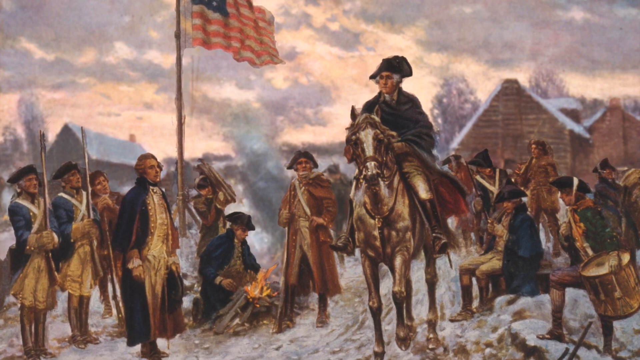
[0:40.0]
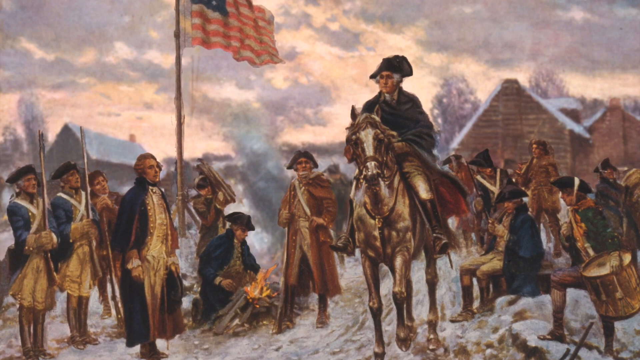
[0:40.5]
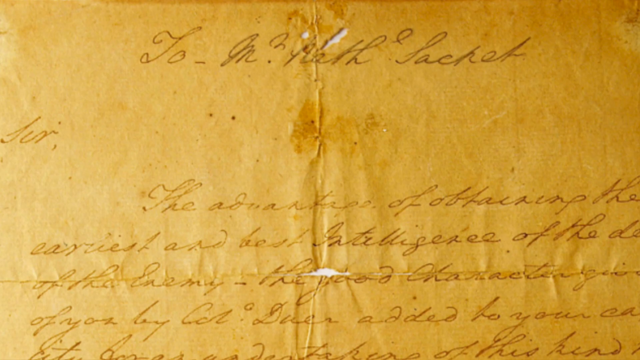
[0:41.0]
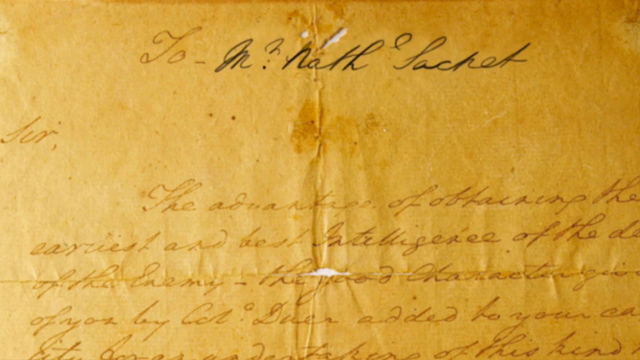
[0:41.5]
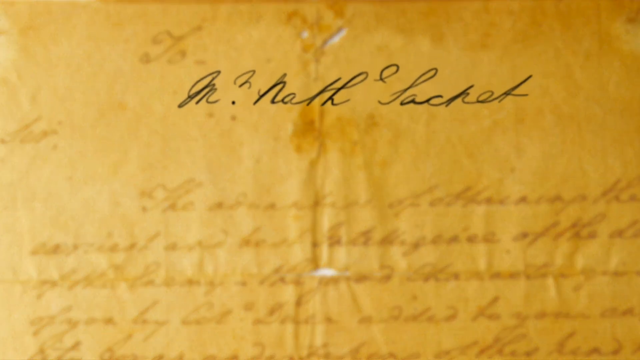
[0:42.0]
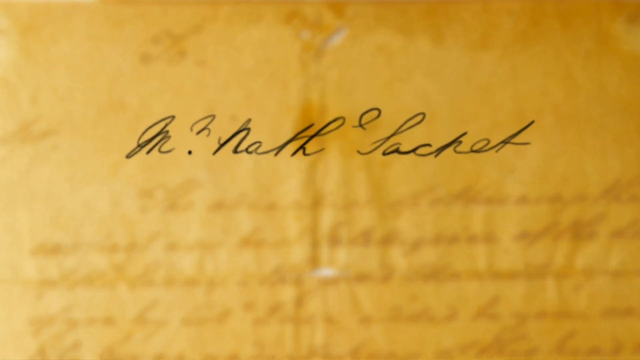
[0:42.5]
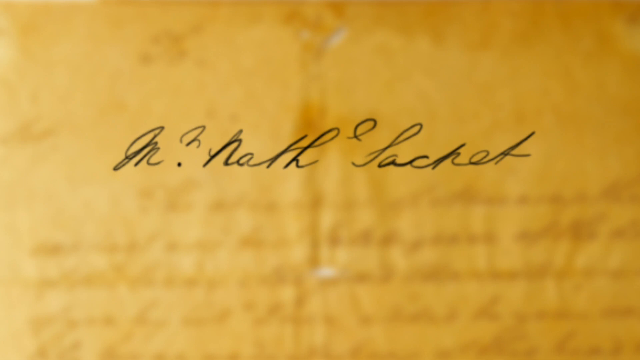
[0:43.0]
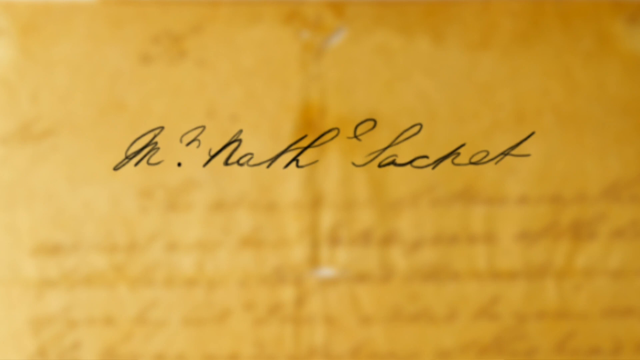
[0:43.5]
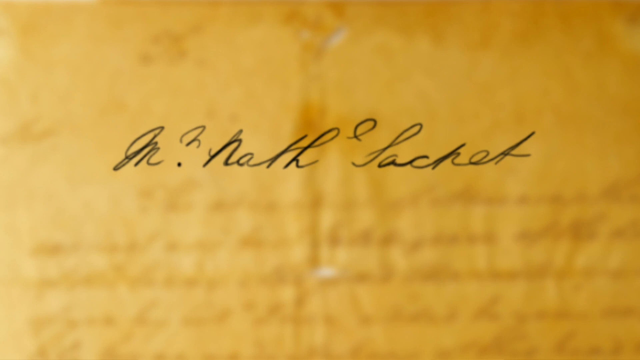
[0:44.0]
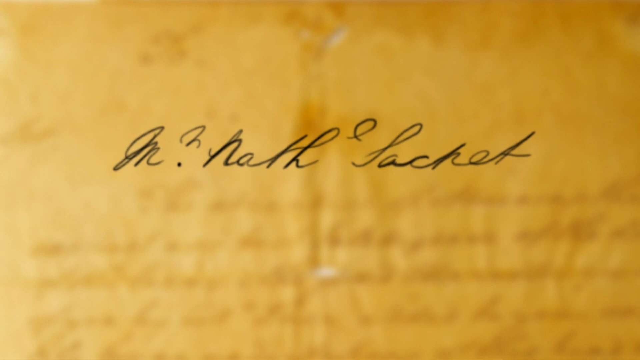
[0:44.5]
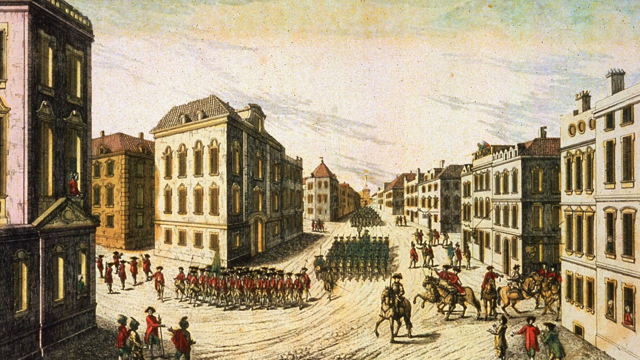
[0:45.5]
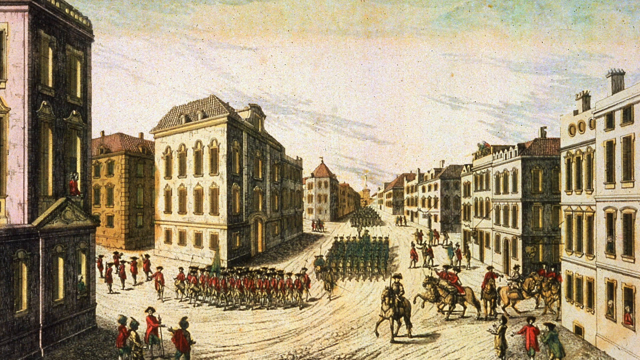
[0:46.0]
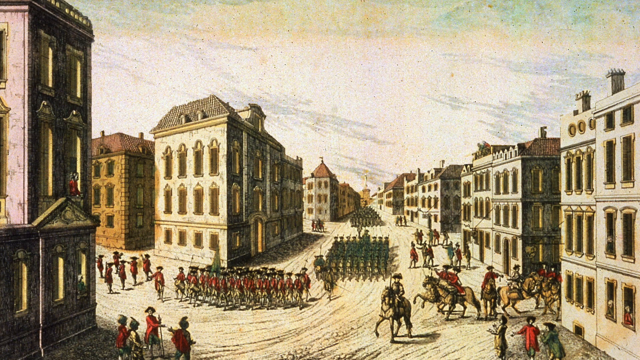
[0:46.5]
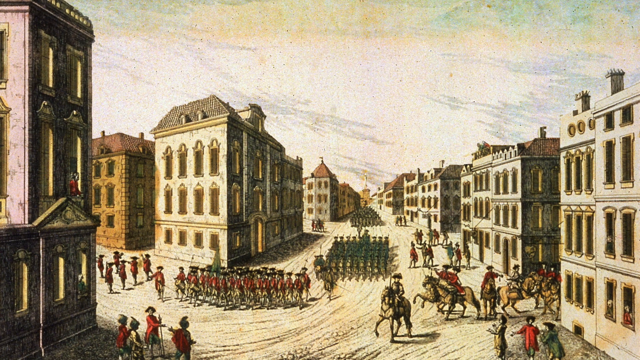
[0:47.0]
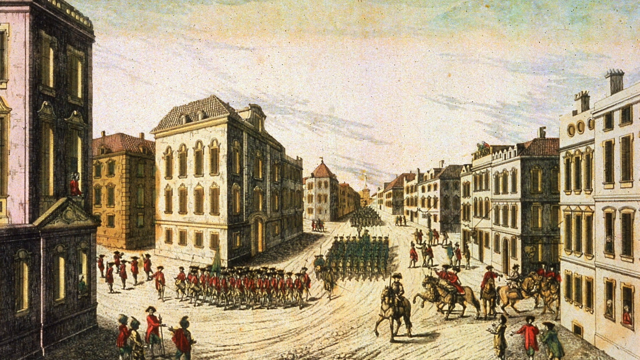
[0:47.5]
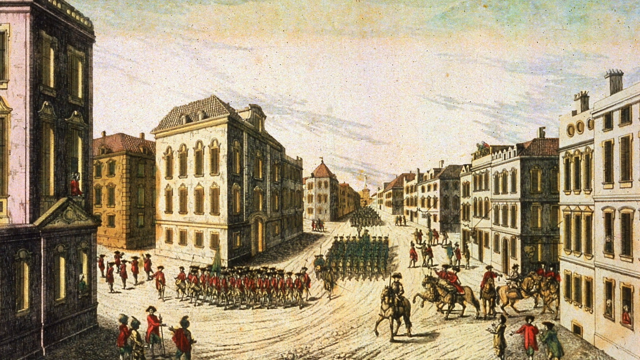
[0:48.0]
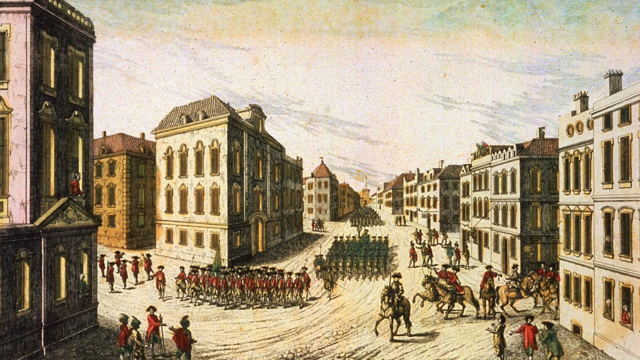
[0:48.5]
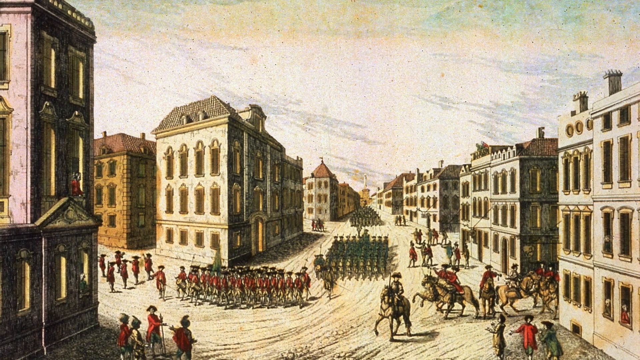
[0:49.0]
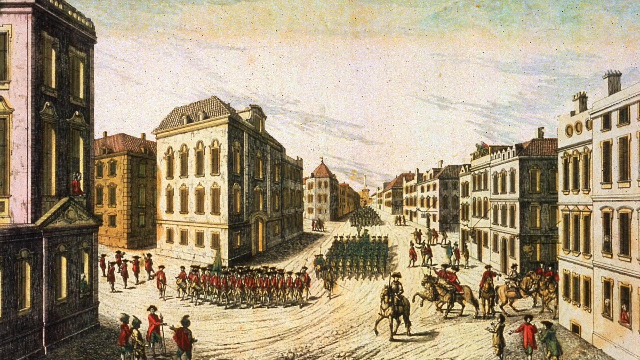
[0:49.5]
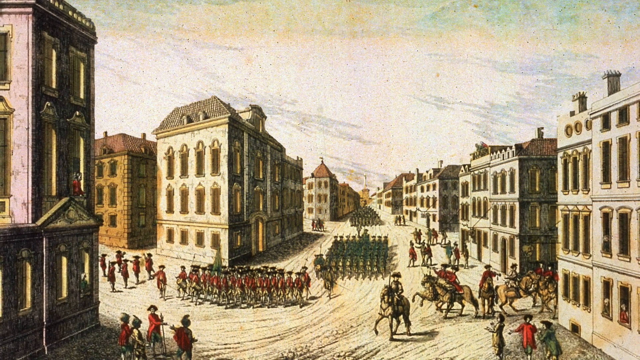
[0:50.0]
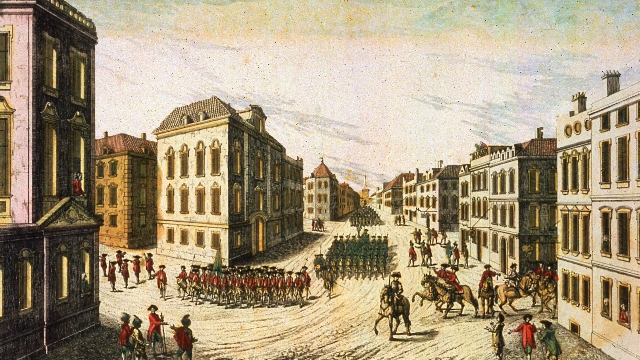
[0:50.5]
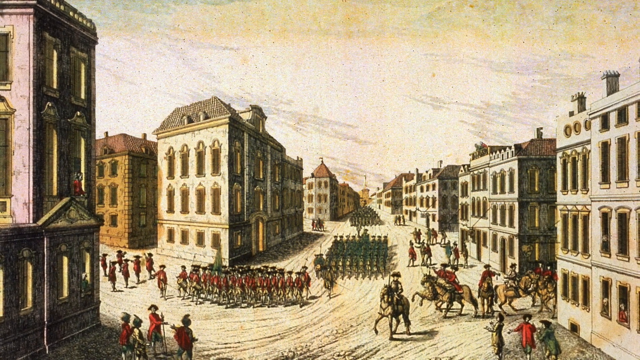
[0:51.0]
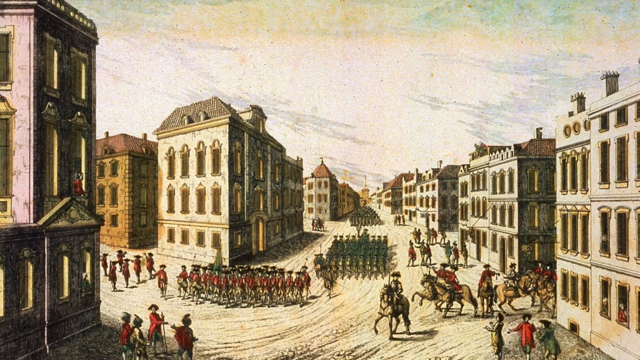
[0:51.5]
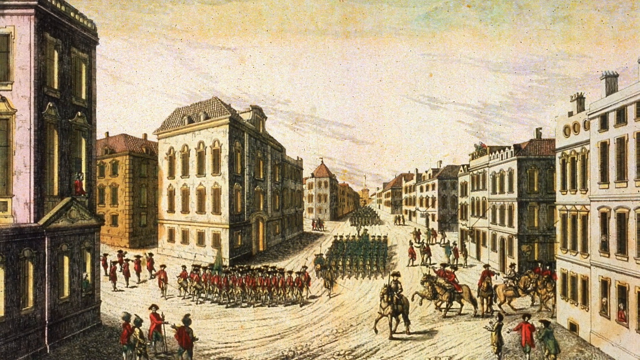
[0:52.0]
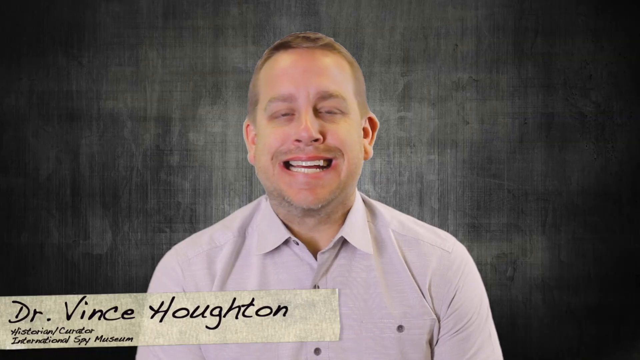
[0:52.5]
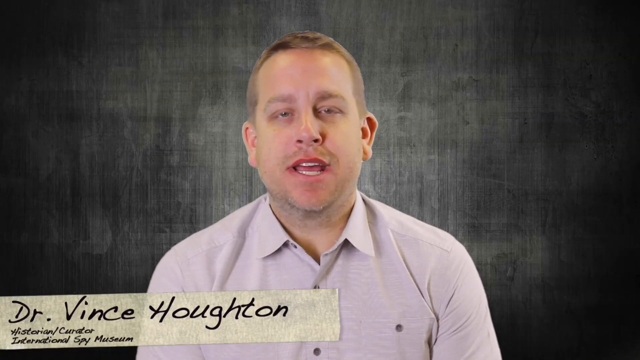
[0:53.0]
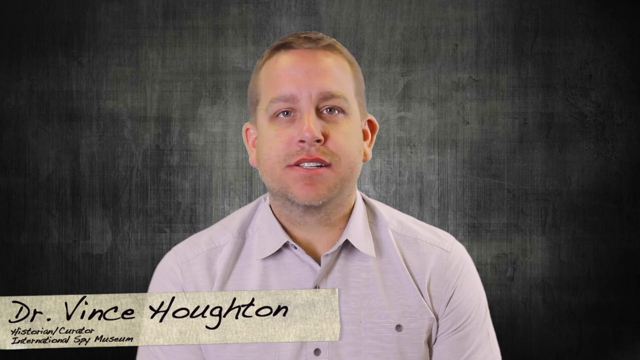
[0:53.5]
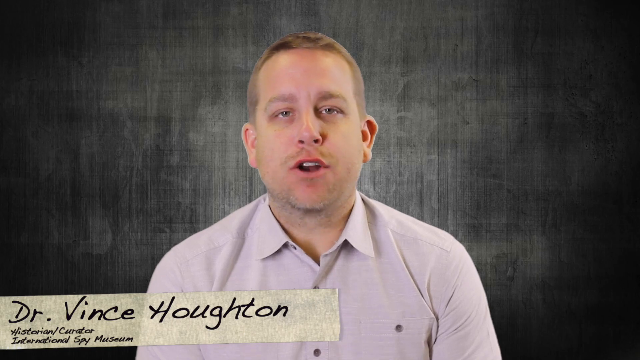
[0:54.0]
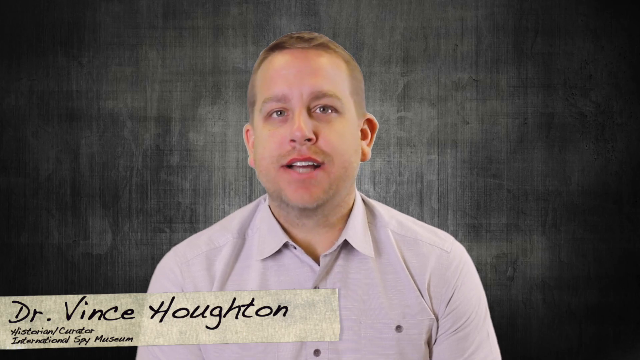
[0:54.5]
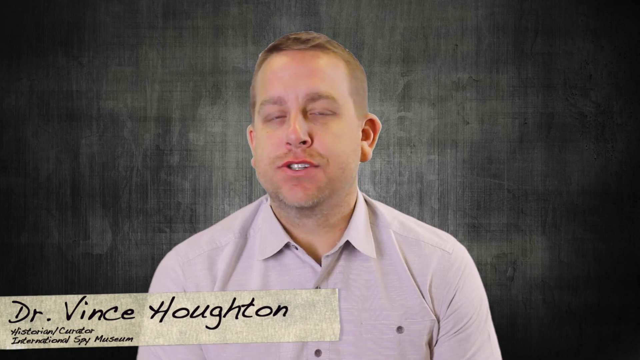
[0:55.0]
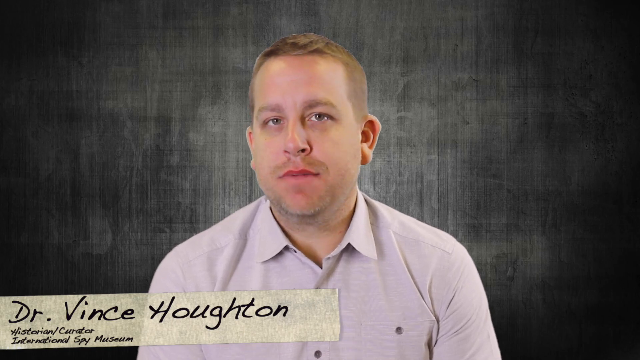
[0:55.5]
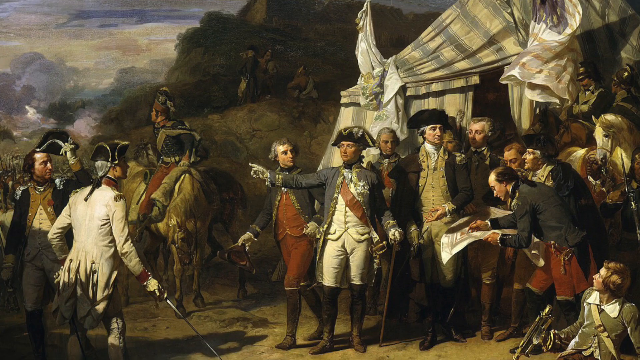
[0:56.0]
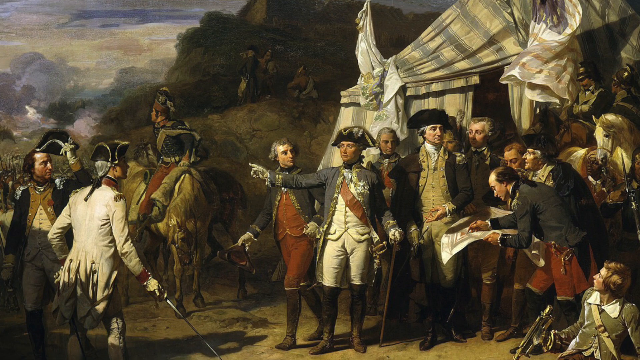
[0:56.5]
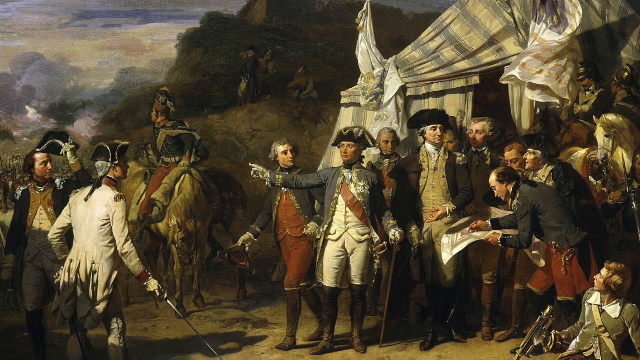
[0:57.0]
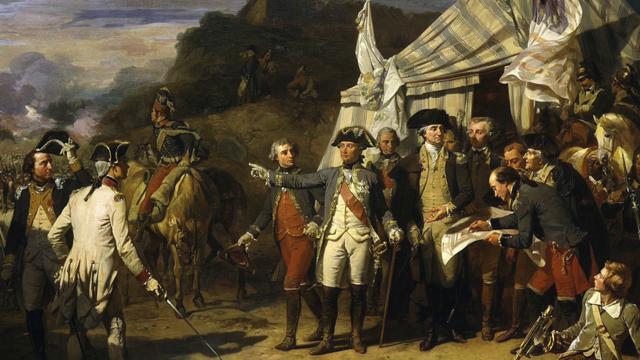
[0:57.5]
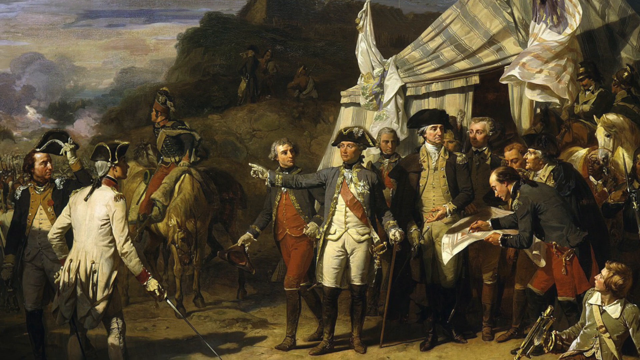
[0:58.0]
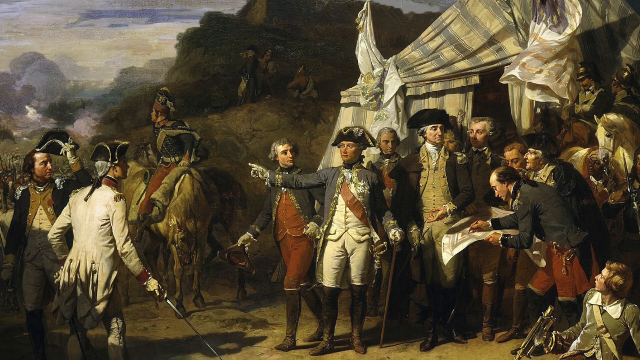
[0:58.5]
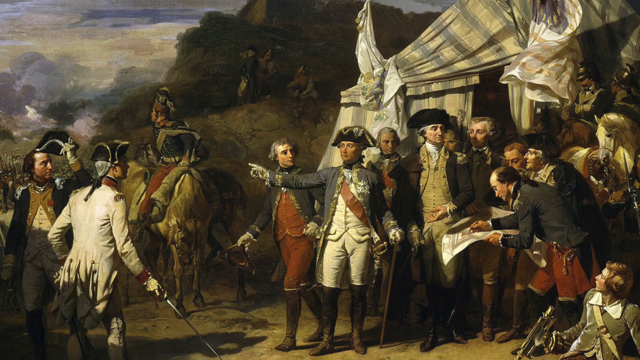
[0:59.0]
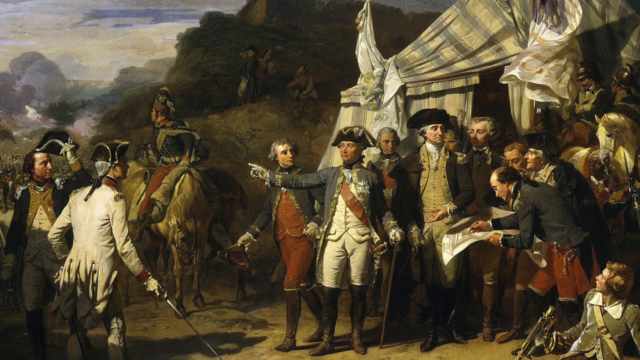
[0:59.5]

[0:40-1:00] A painting shows what seem to be American troops during the Revolutionary War. Prominently in the center is General George Washington, mounted on a brown and white horse. Multiple troops surround him, either sitting or standing, and in the background there is a colonial flag with red and white stripes and 13 stars, as well as multiple cabins. The painting is supposed to depict the winter at Valley Forge. The video cuts to a handwritten note in black ink on an aged piece of paper that has yellowed with time and has multiple stains, as well as holes on the creases where it was folded. The very top of the letter is zoomed in on and imposed on the center of the screen, showing cursive text written in black ink. The video then cuts to a painting of British soldiers of the 1700s marching down a main street in columns, with British soldiers mounted on horses also coming from a side road.